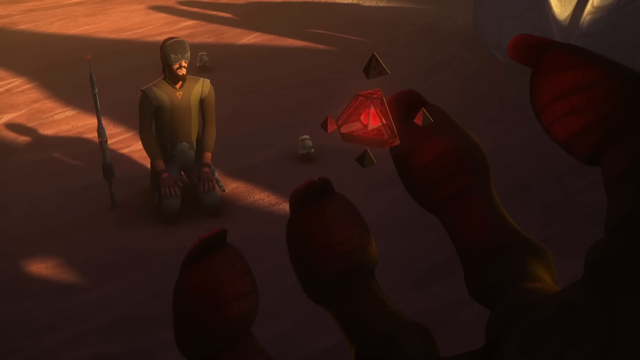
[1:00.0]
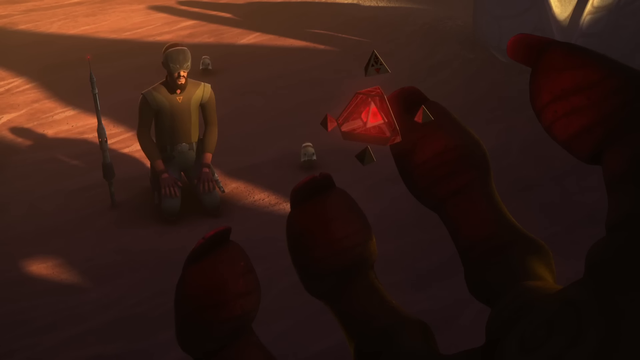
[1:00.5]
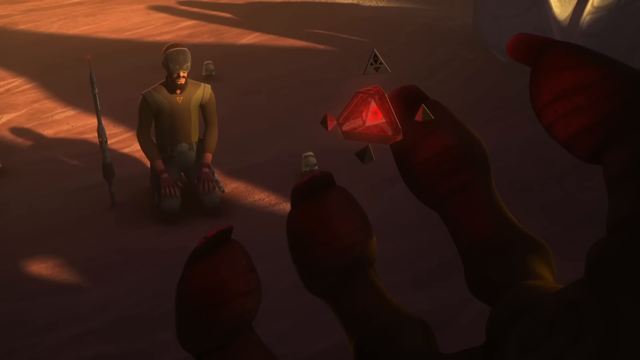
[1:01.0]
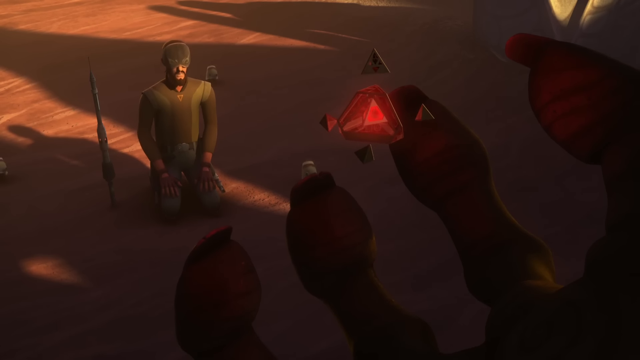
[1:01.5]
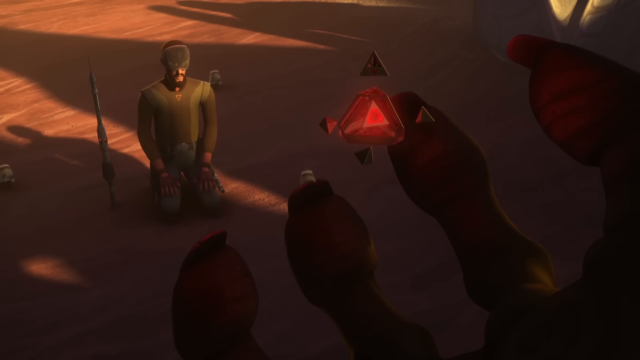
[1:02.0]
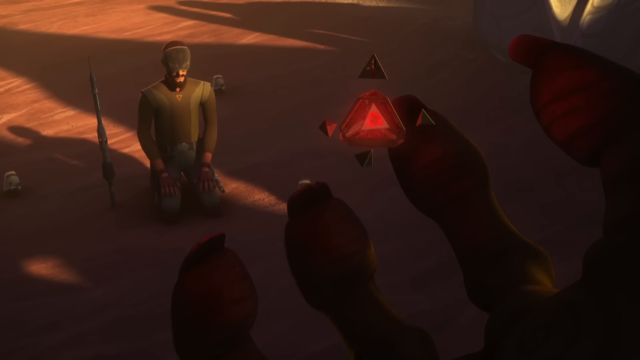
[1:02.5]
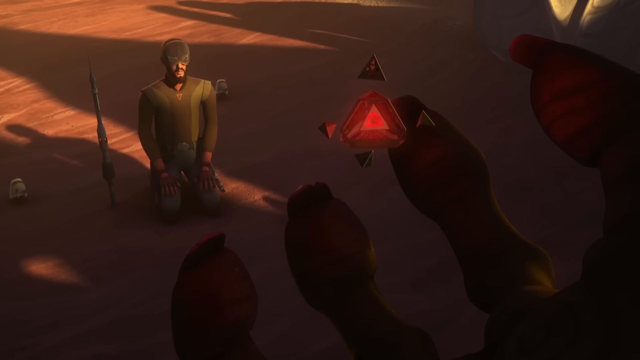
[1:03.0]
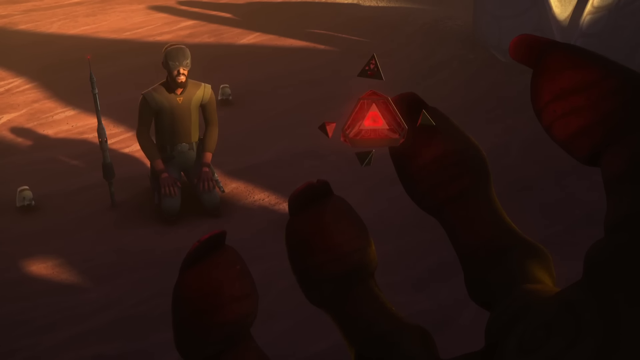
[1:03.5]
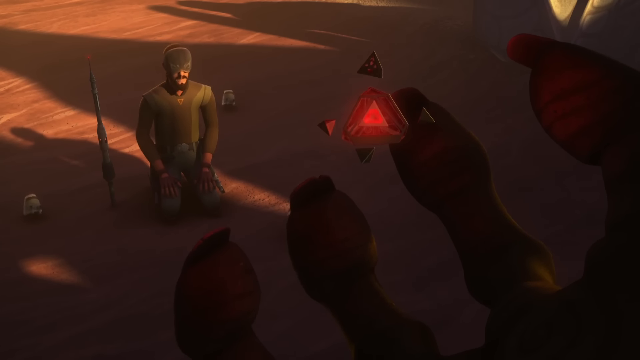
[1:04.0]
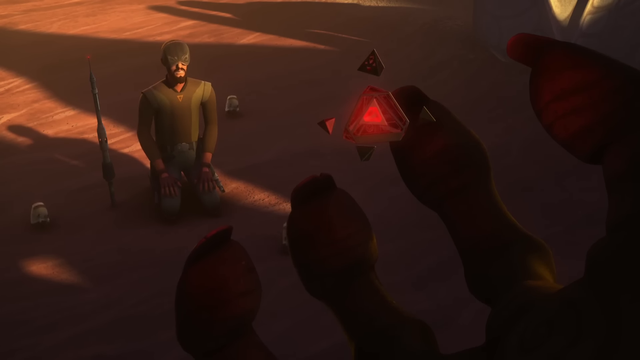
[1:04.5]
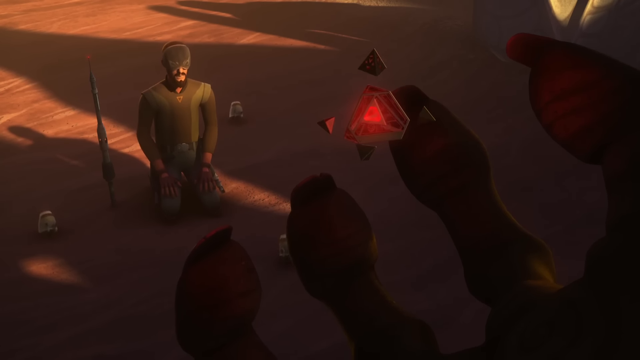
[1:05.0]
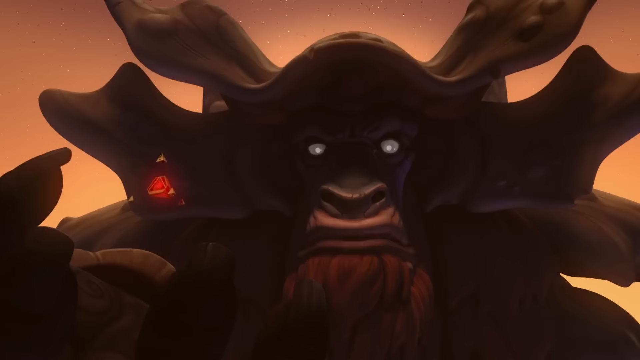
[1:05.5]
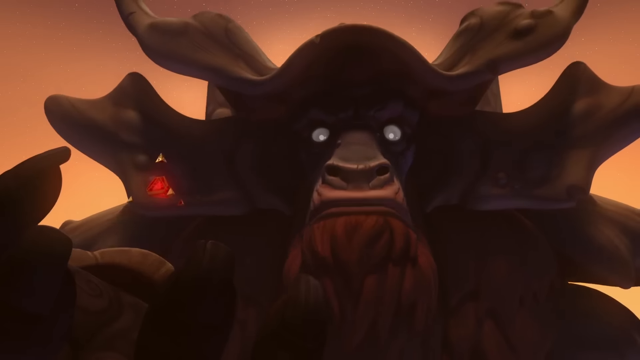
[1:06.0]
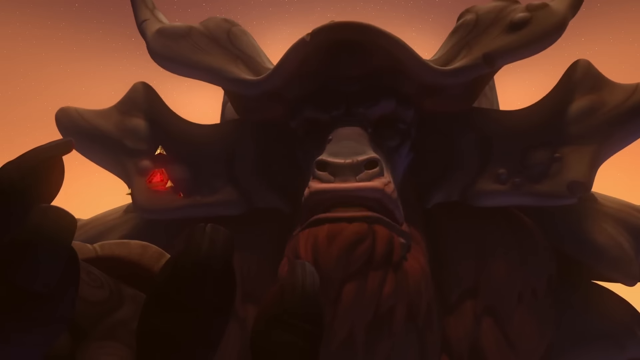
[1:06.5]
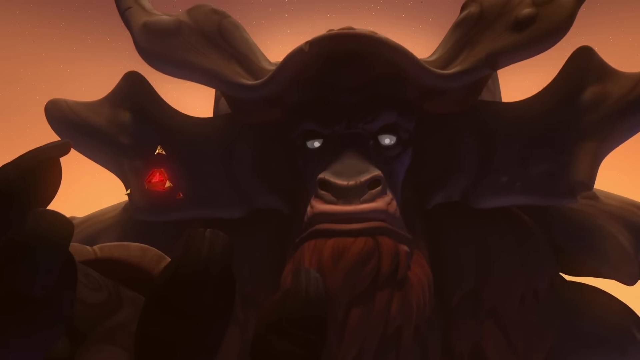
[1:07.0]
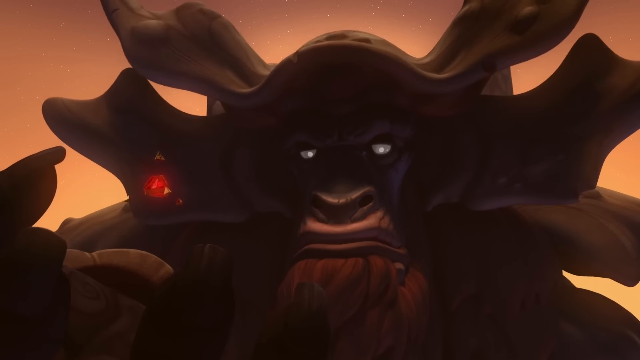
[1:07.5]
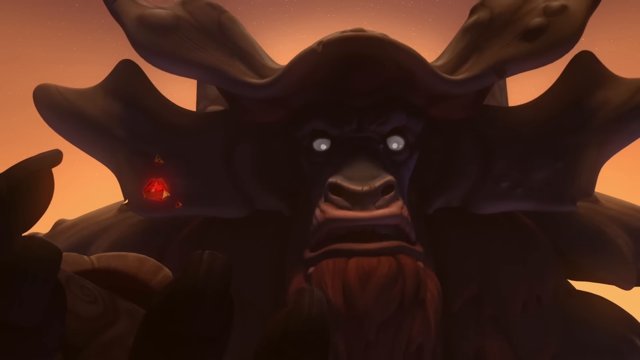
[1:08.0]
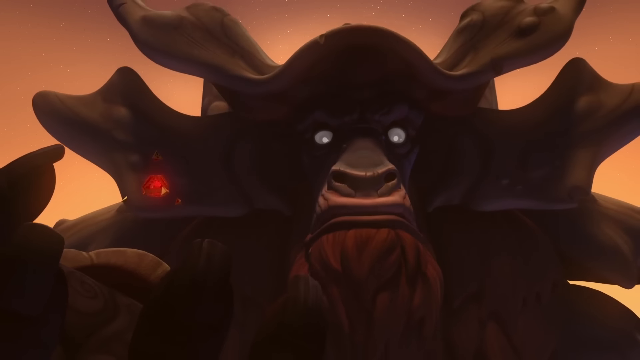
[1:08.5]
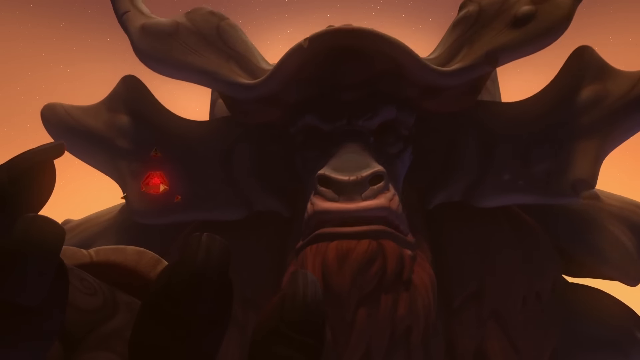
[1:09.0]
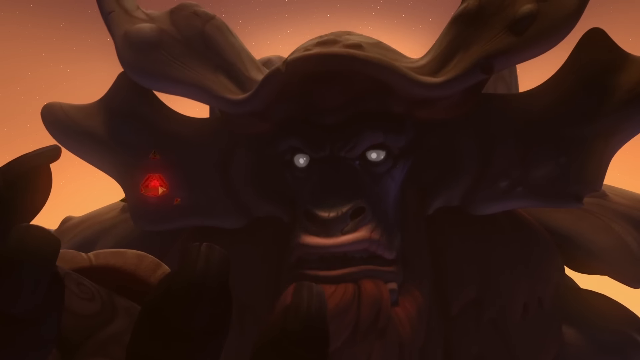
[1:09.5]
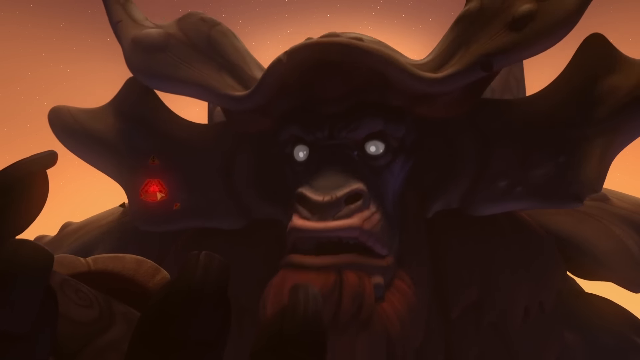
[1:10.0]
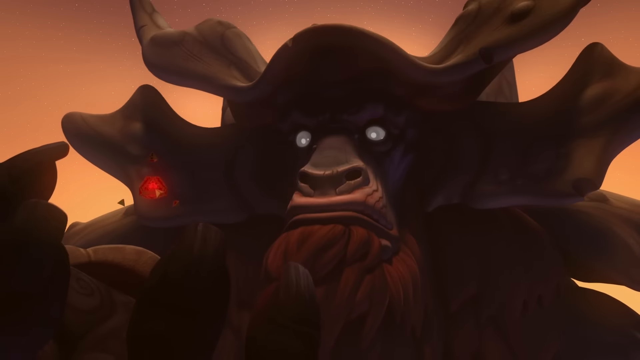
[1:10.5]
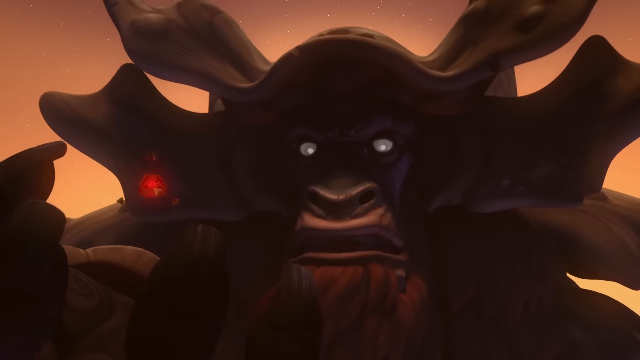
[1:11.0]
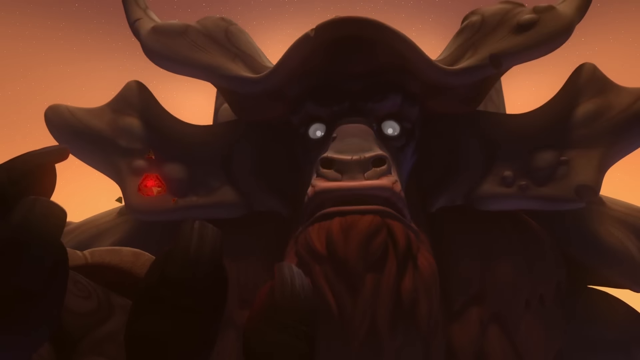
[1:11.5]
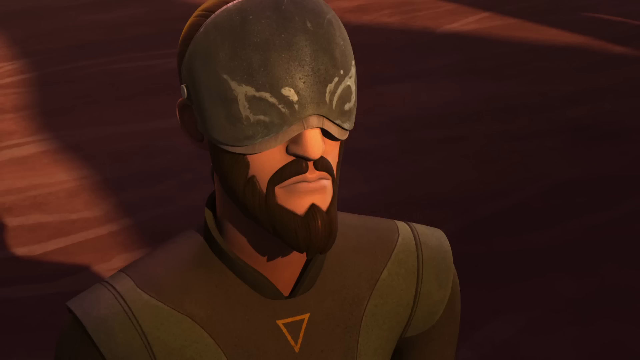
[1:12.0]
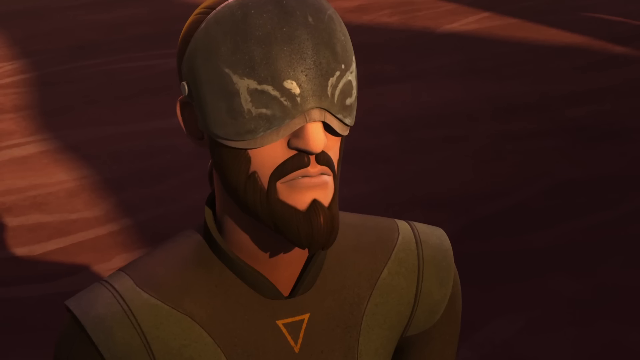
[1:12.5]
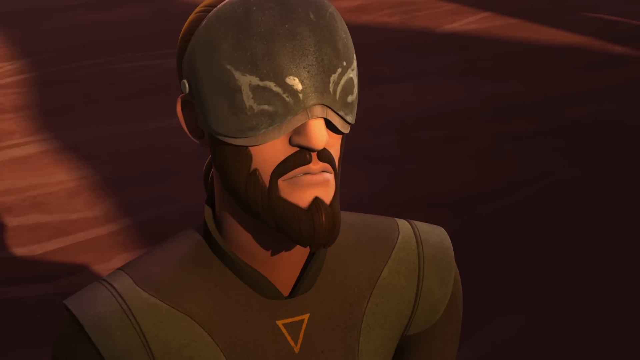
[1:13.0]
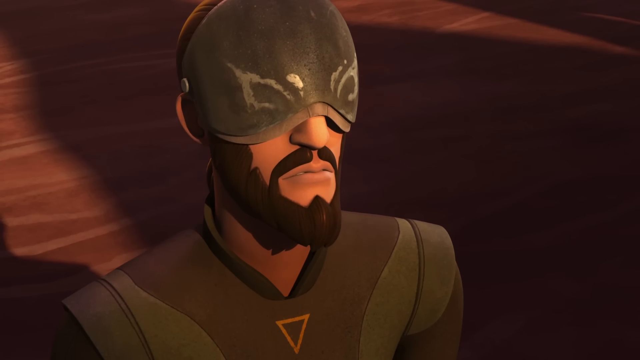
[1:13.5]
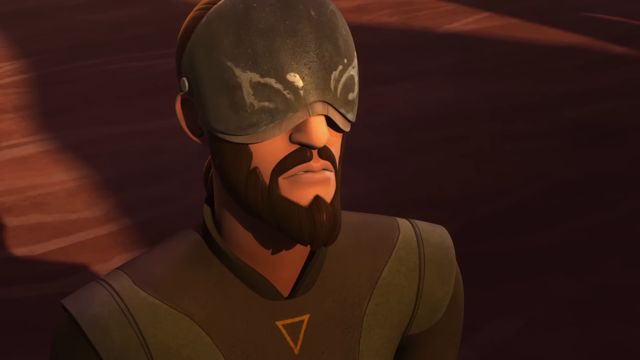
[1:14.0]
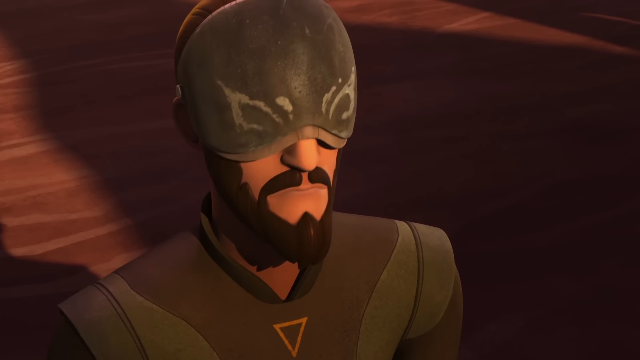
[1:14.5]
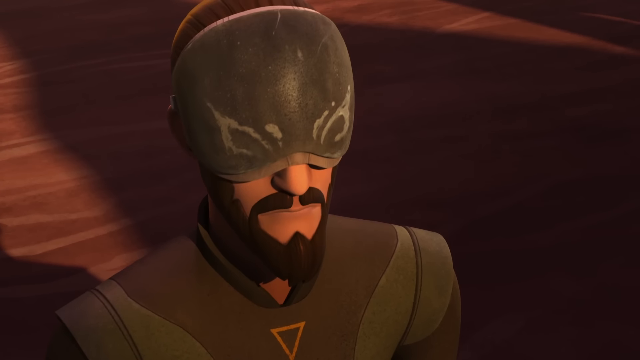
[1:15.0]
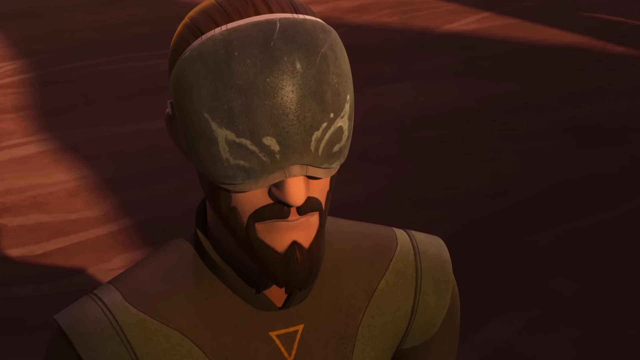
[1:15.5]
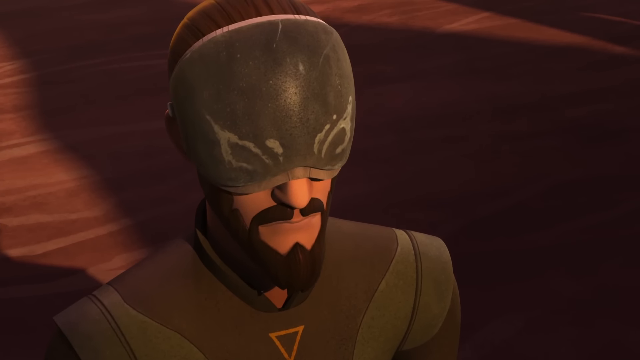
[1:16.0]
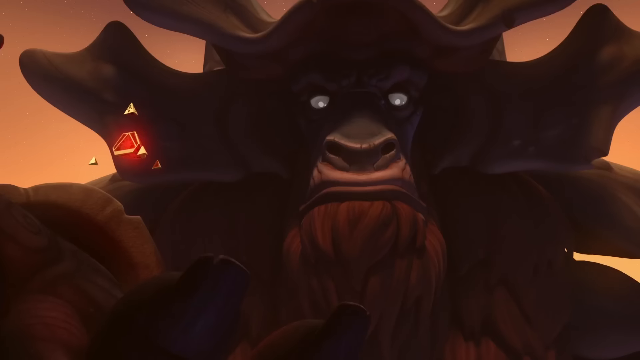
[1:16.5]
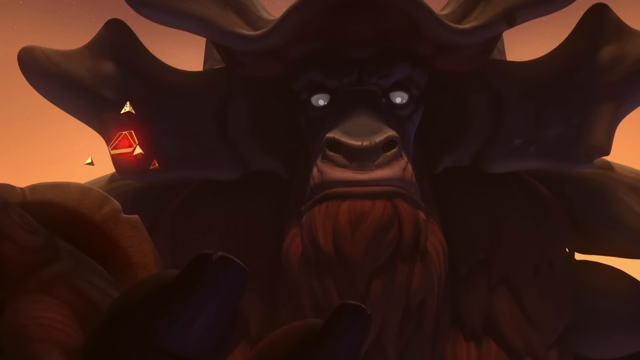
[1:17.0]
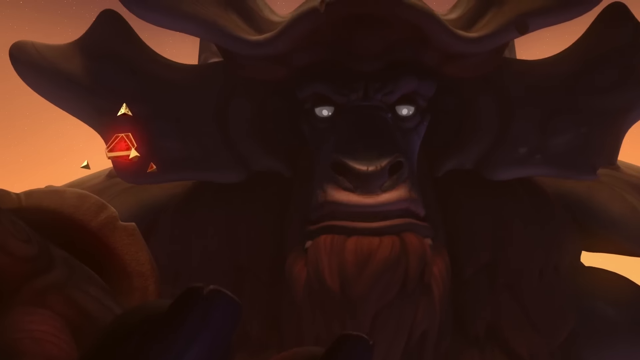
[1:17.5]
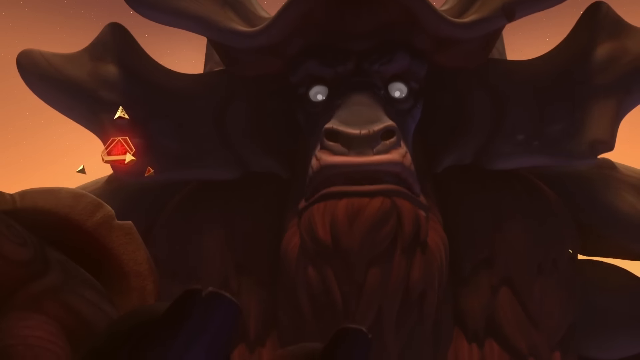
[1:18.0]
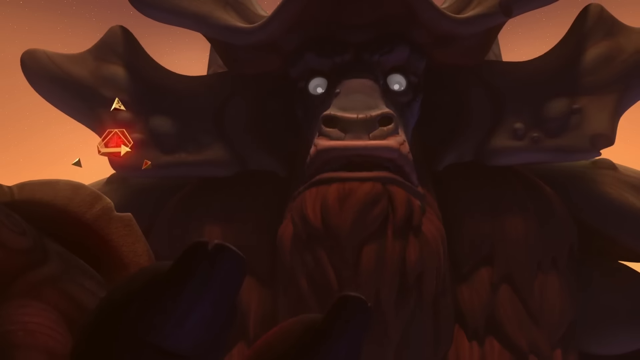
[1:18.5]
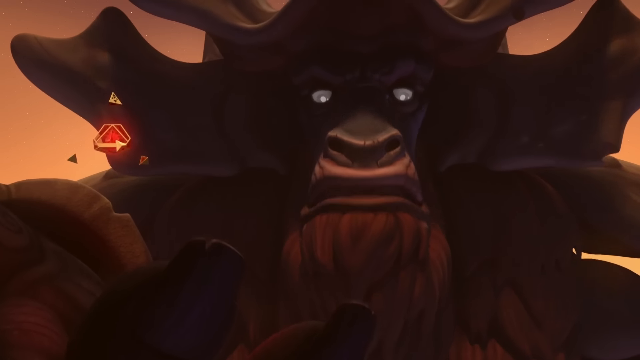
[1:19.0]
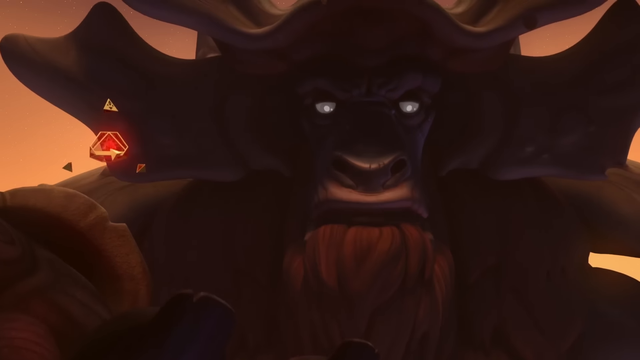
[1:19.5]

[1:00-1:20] The scene shows a desert-looking landscape, very flat, with shadows all over the place in an unclear design. A man squats facing the viewer on his knees and calves, with one hand on each knee. Beside him is some sort of weapon, either standing up on its own or stuck in the ground; it is hard to tell. He wears a mask covering his forehead and eyes and has a beard that comes to a sharp point and a full mustache. Beside him on the left is something that looks to be a little animal in the sand. A red object floats in the center of the screen; it looks to be a triangle or pyramid, with all of its points cut off and floating beside it. Very large fingers with very large claws come out to grab the busted red orb. More little monsters or animals come in from the sand, and then the view turns to show a big monster that looks like a bull, with orange on his head and big white eyes.